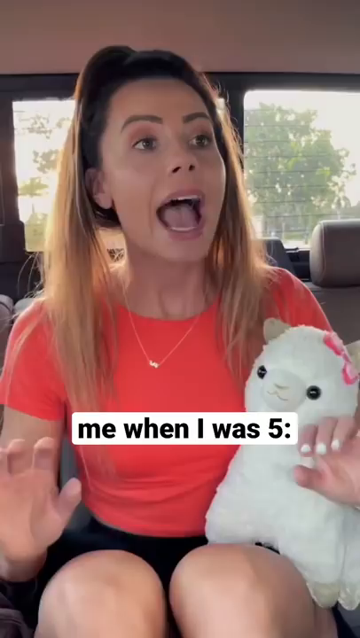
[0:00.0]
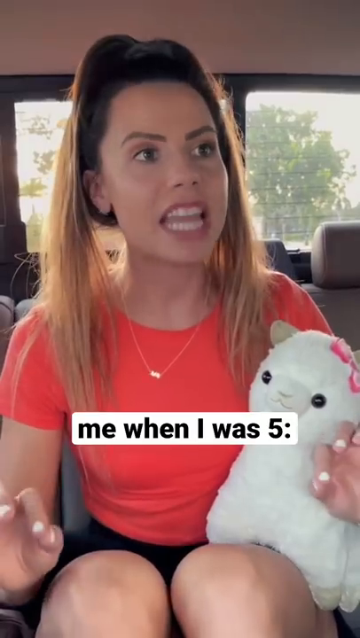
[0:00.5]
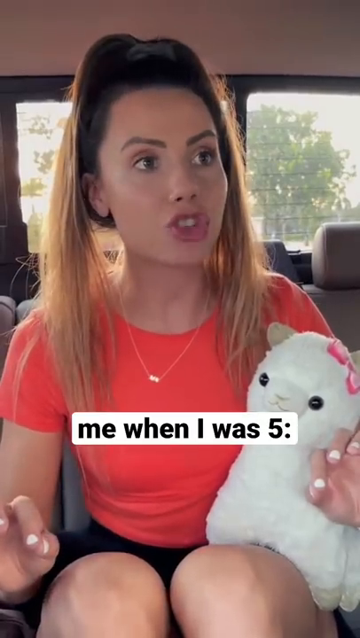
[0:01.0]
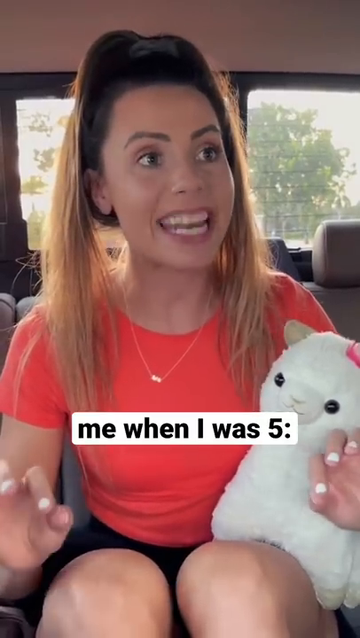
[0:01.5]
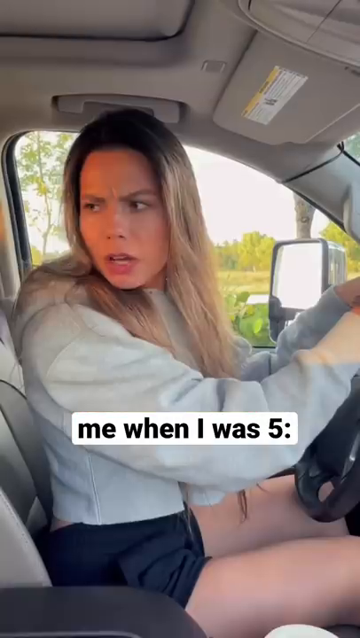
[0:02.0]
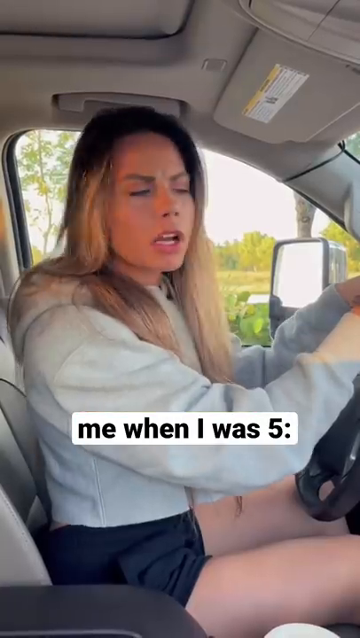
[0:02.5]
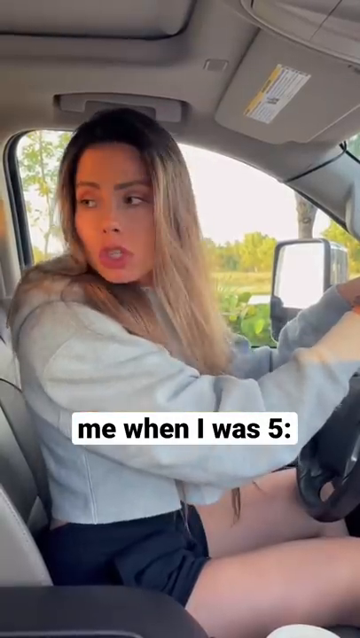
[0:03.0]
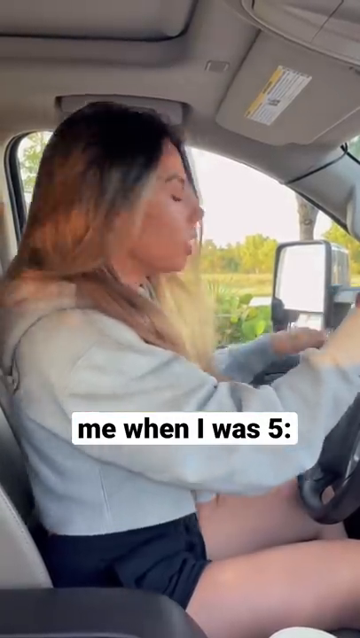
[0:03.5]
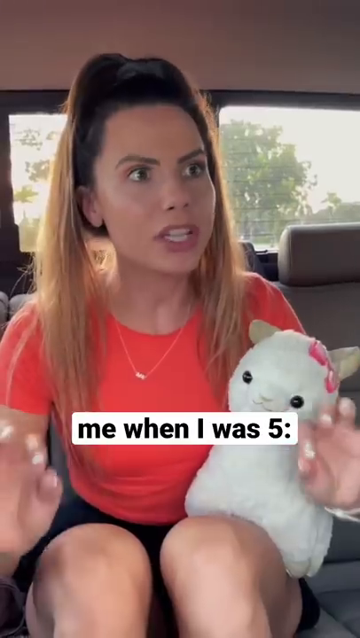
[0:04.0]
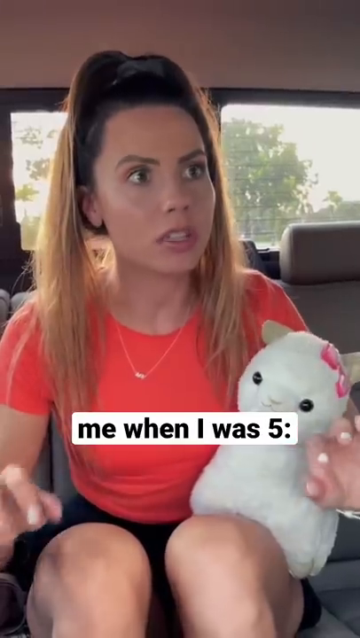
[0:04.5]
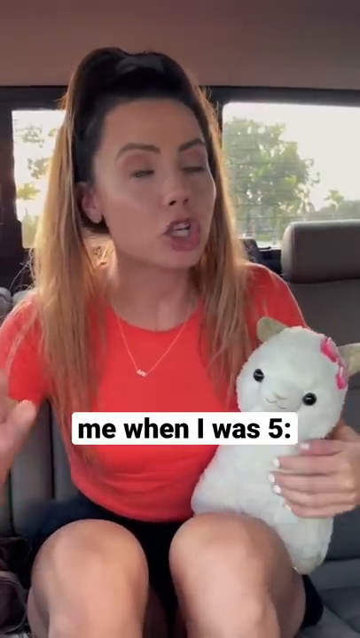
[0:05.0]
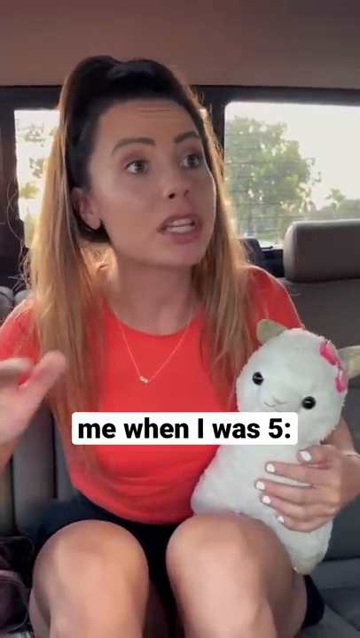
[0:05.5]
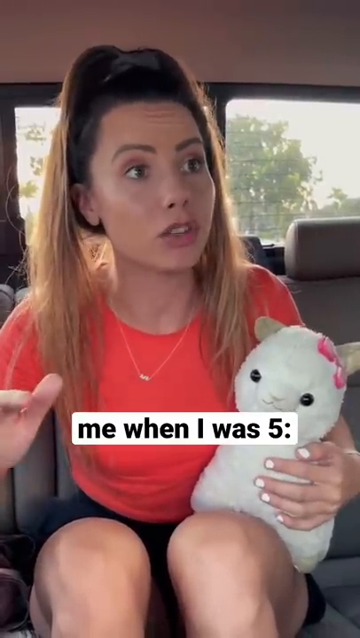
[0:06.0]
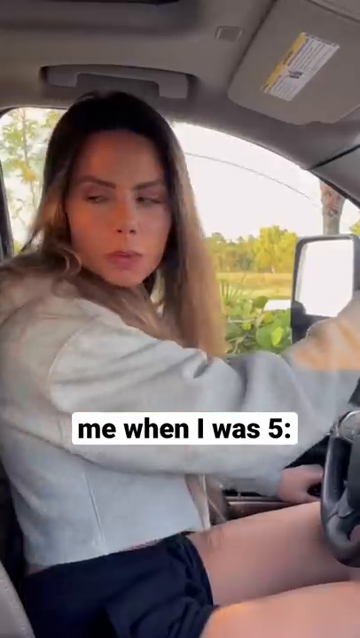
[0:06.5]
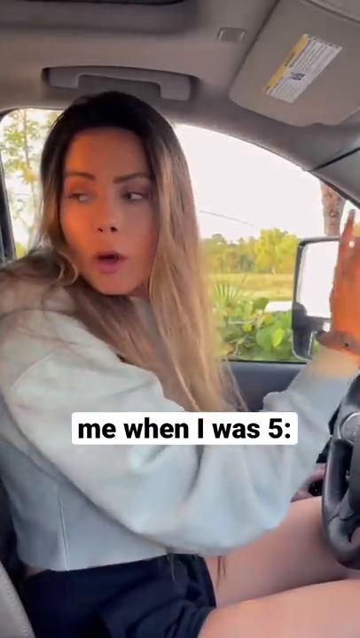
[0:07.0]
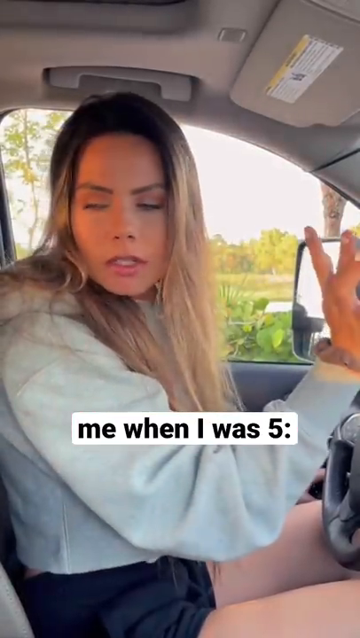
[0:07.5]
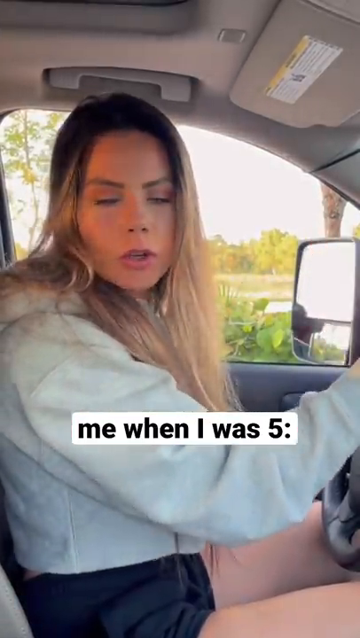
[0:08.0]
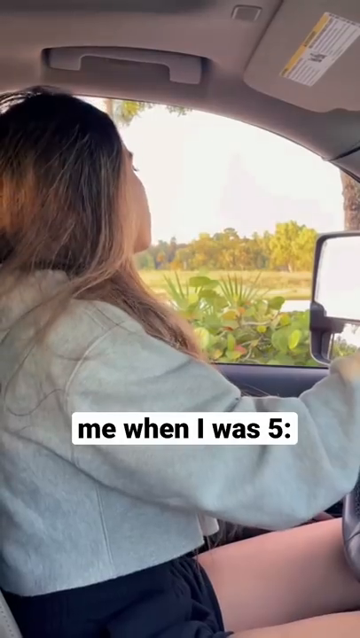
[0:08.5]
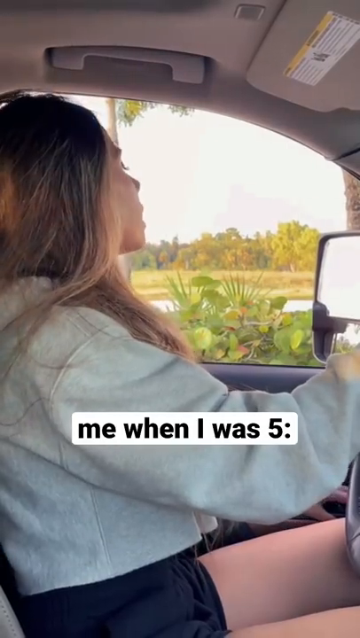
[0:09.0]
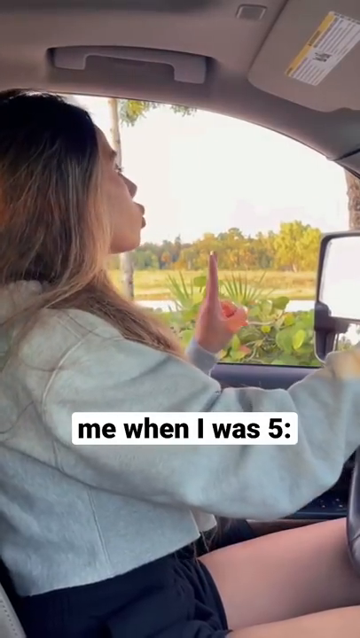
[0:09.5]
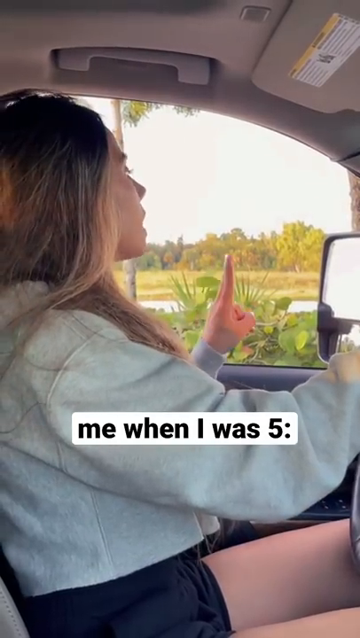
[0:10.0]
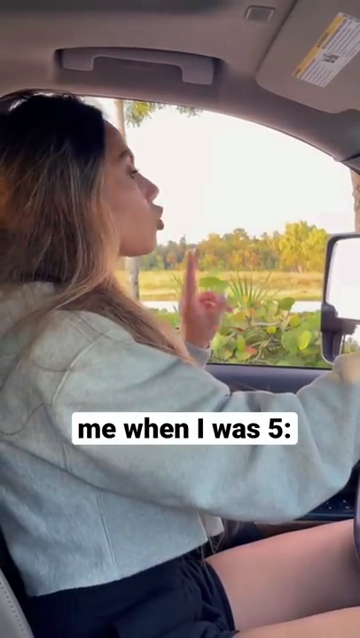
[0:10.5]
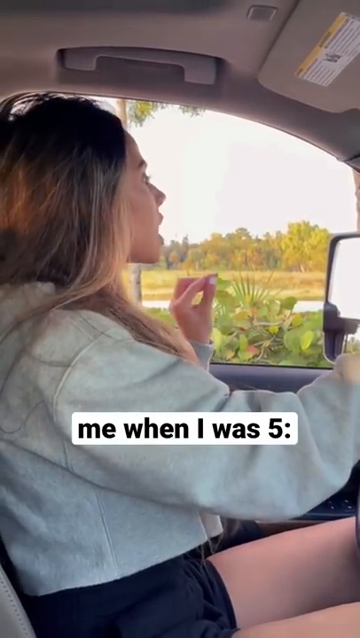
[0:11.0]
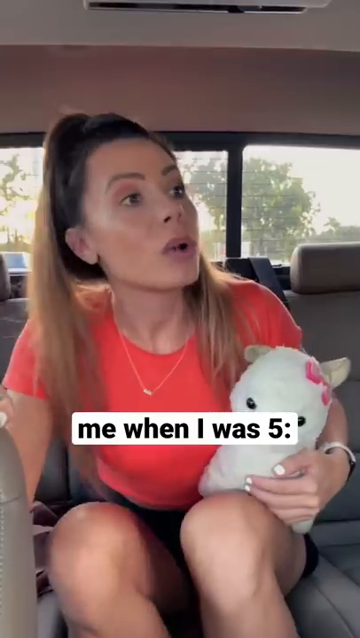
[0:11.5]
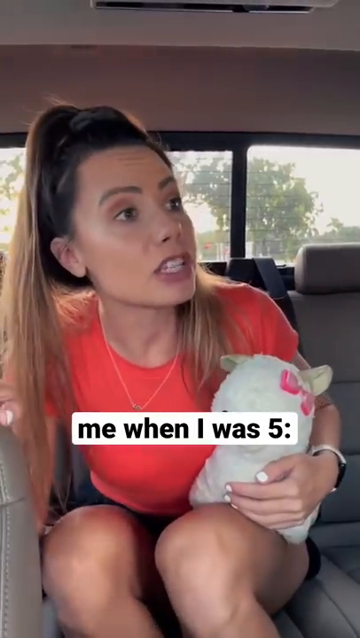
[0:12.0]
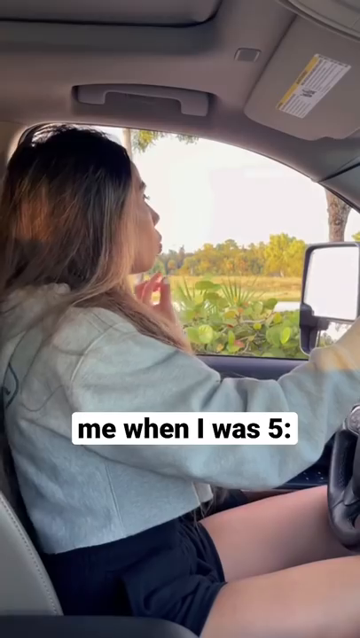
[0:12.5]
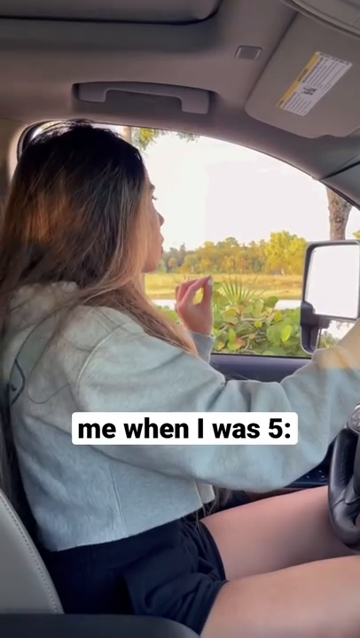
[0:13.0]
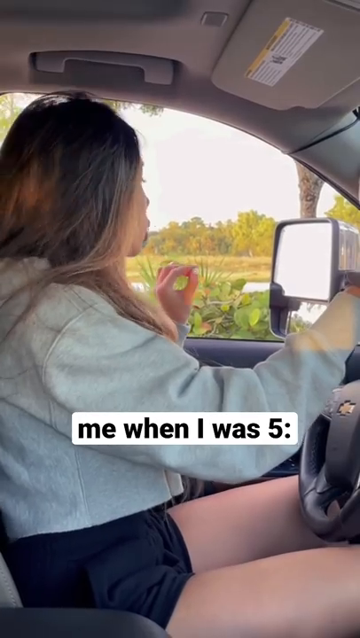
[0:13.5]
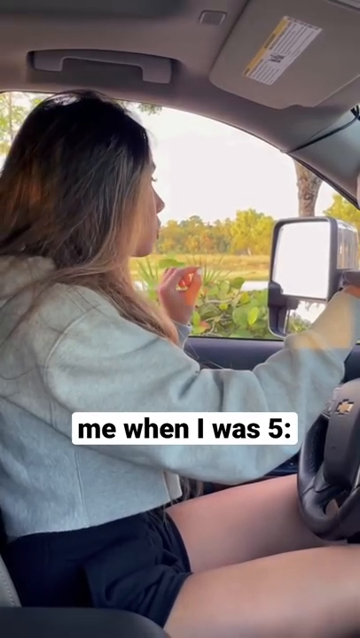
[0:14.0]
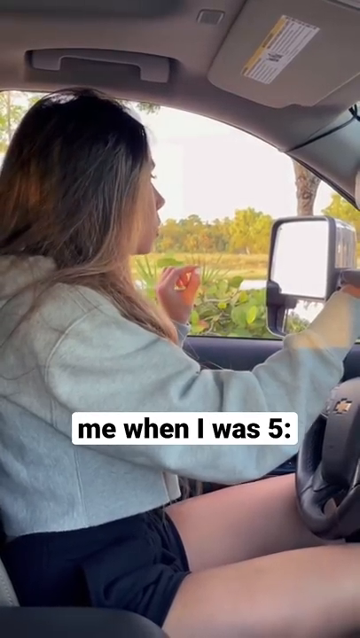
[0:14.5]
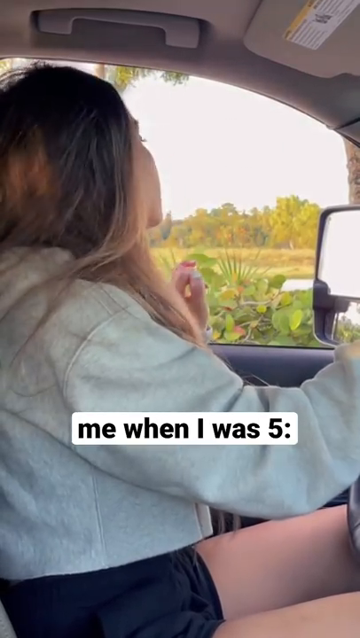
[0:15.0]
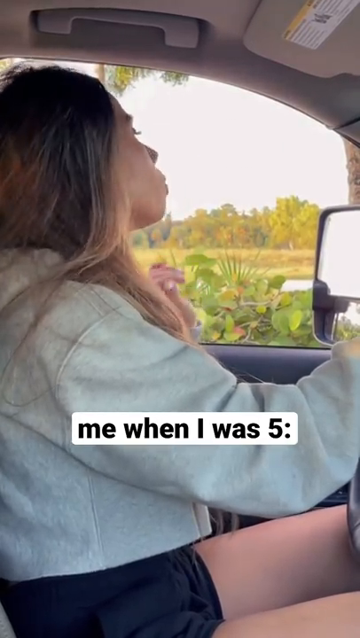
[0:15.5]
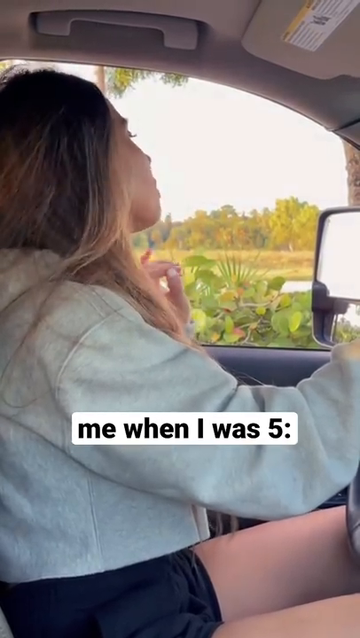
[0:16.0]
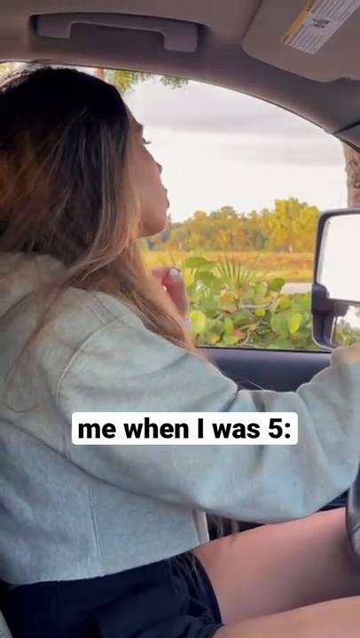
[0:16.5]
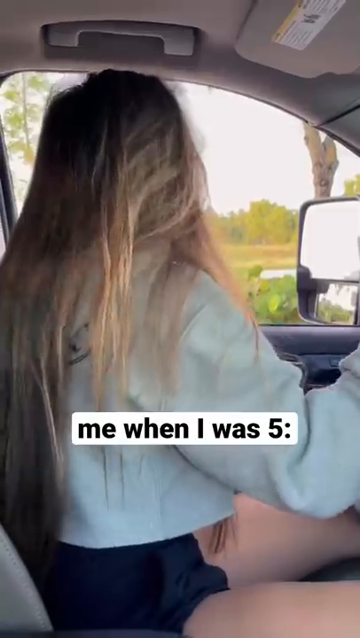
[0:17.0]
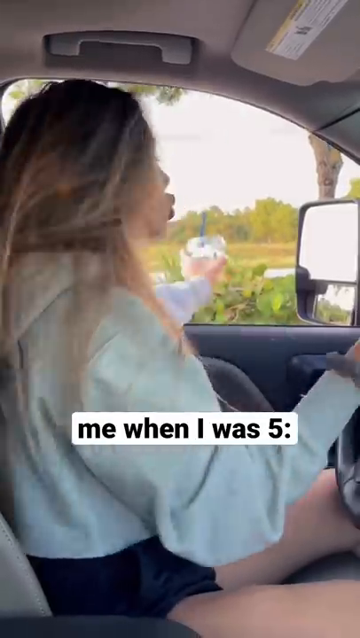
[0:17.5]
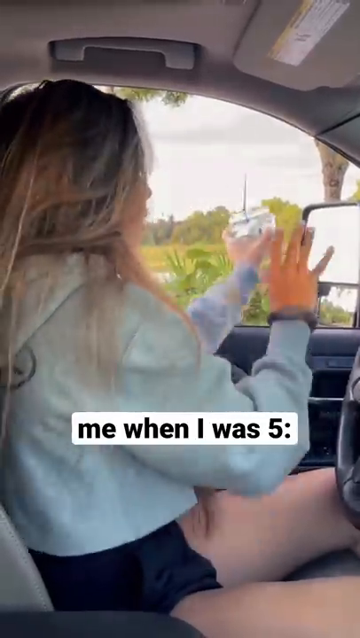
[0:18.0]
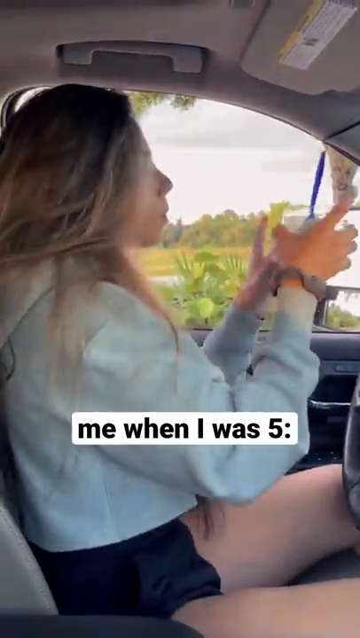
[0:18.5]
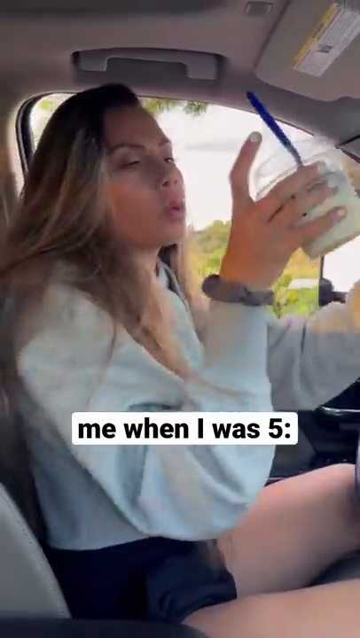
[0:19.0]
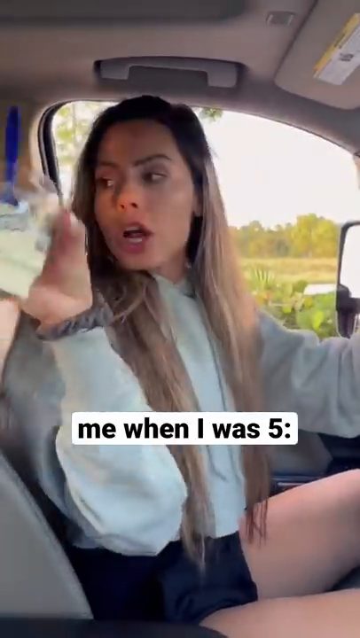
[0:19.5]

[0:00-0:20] A young woman, probably around 20 years old, is in a vehicle playing a double role. As the mother, she is at a drive-thru window picking up food; in another take she sits in the back seat acting like a little child of about five years old. The daughter in the back seat has a little stuffed rabbit. The daughter seems to be angry with her mom and complaining, and the mother turns around and gives her something from the drive-thru window. There is no actual restaurant or drive-thru window; the mother places the order and apparently also tries to redirect her daughter, who is complaining or making demands. In both roles, the mother and the daughter are agitated and upset with each other. On the screen is the text "me when I was five," as she acts like her five-year-old self in the back seat, waiting for her mother to place an order at a drive-thru window.